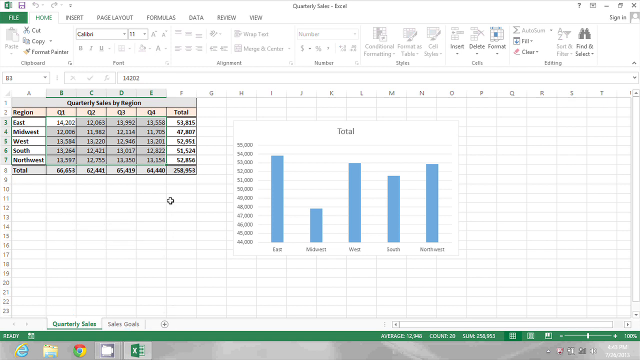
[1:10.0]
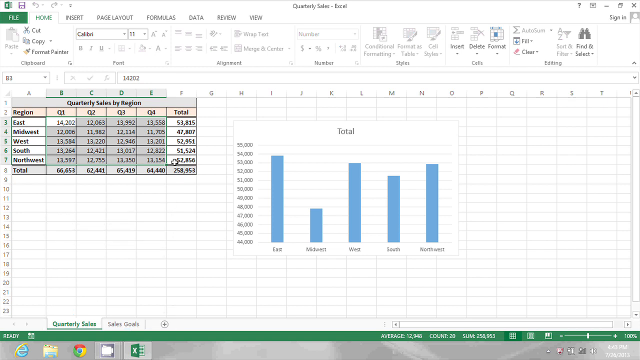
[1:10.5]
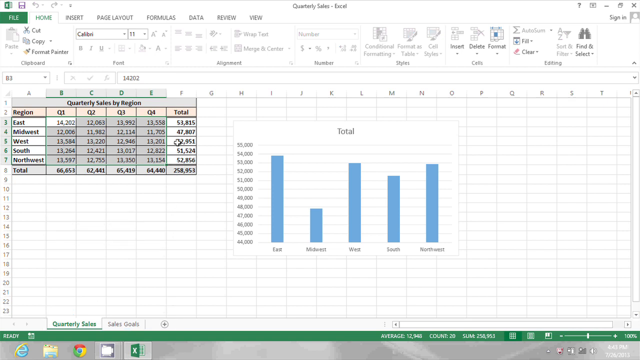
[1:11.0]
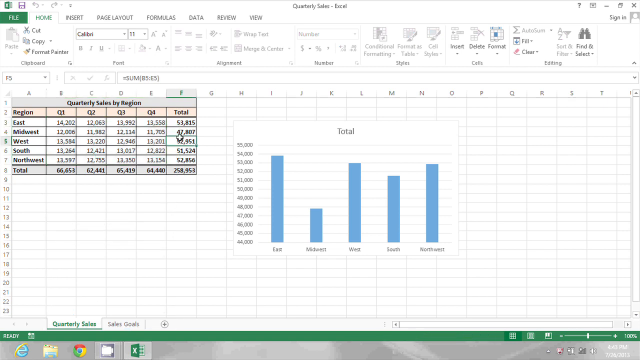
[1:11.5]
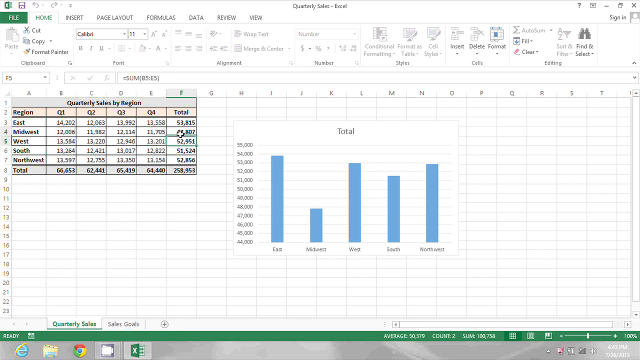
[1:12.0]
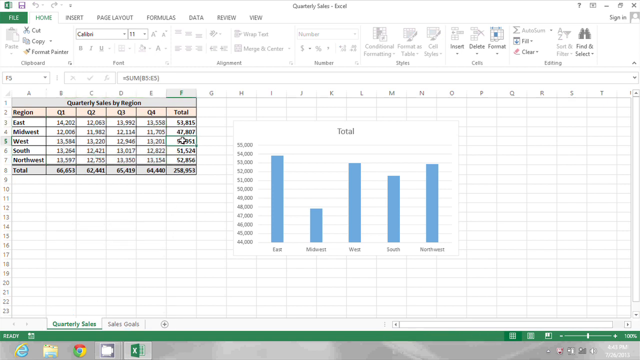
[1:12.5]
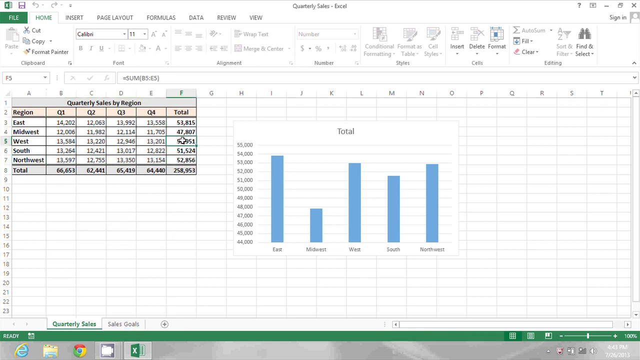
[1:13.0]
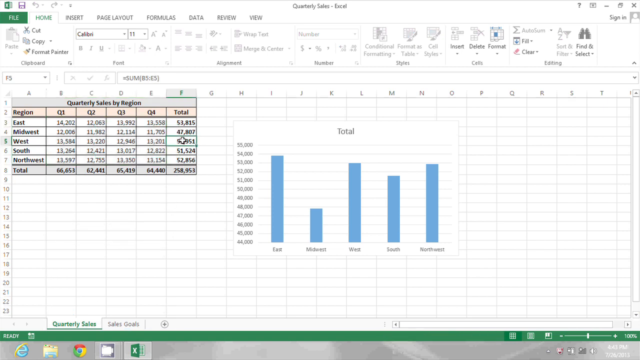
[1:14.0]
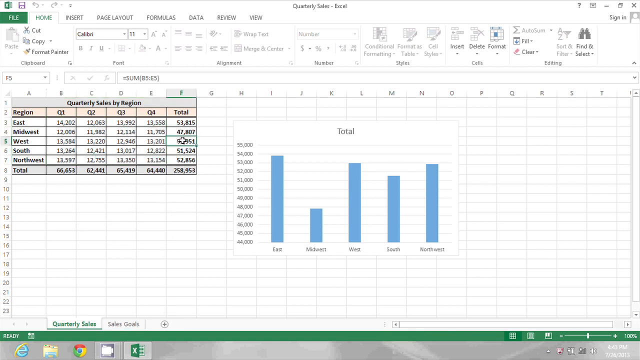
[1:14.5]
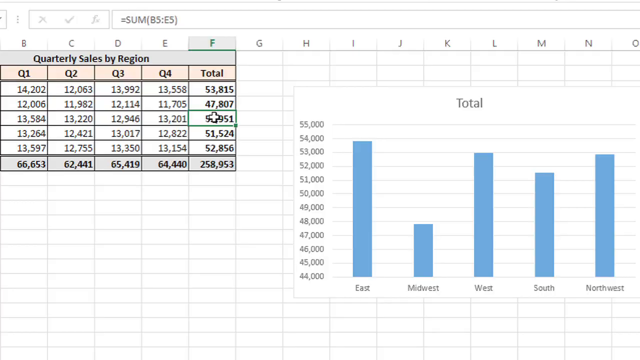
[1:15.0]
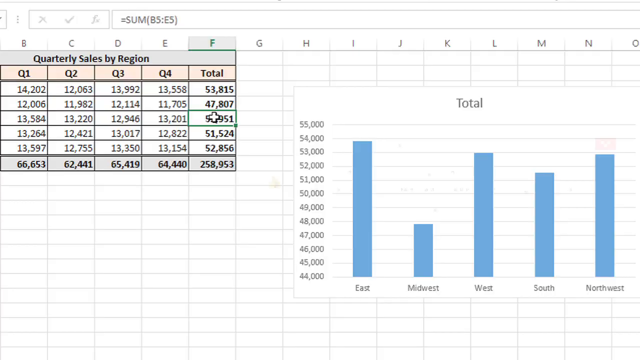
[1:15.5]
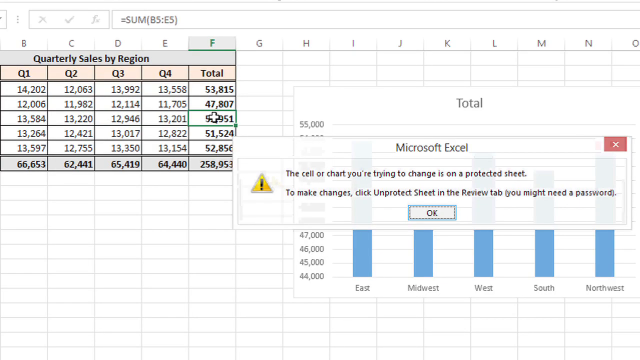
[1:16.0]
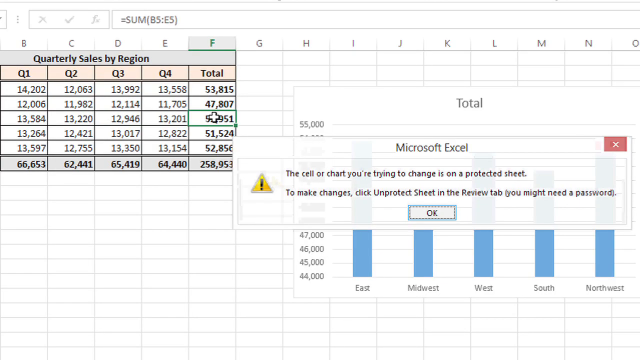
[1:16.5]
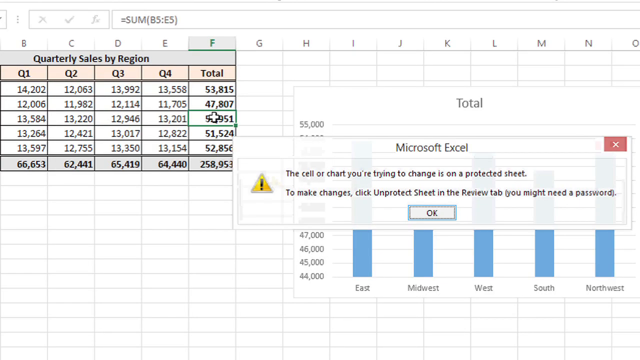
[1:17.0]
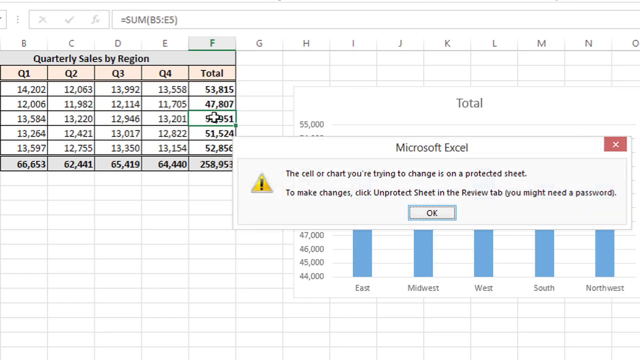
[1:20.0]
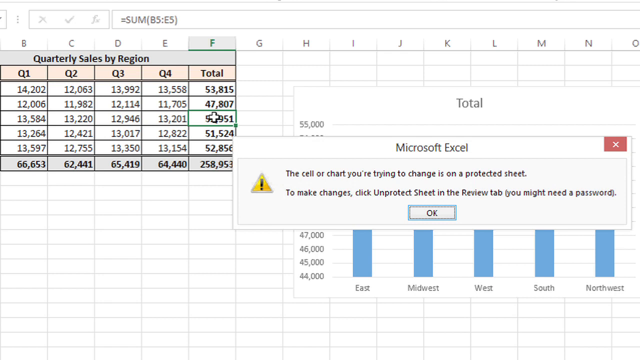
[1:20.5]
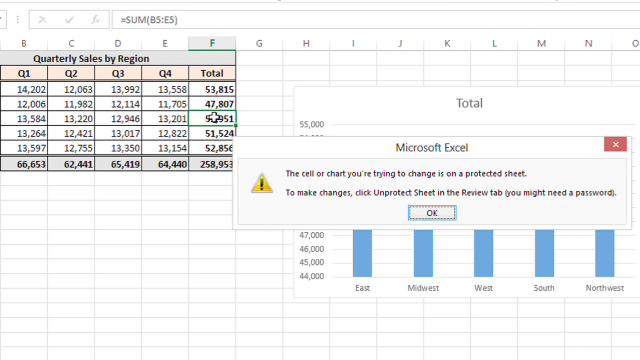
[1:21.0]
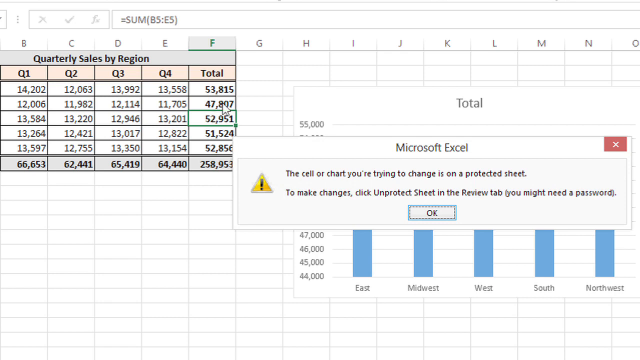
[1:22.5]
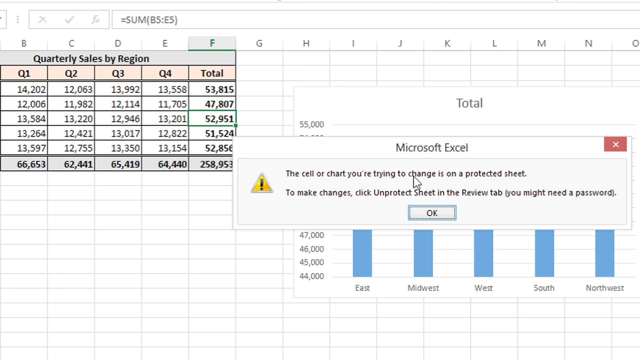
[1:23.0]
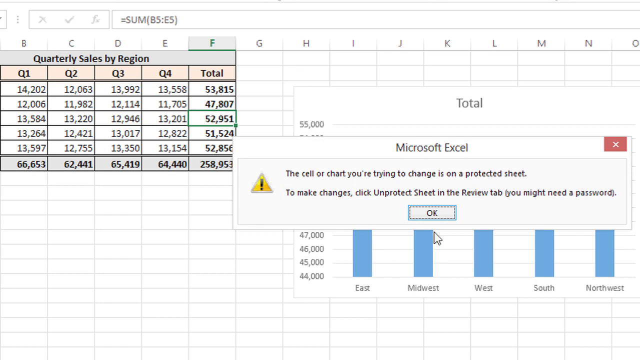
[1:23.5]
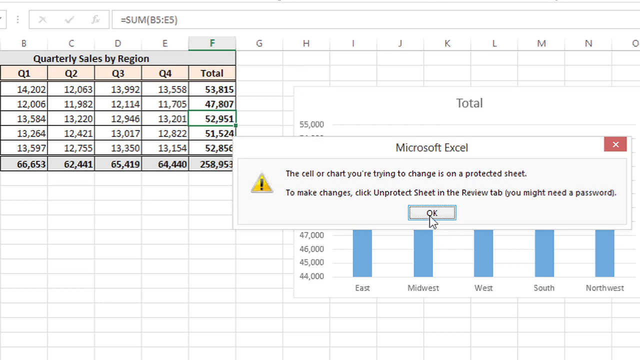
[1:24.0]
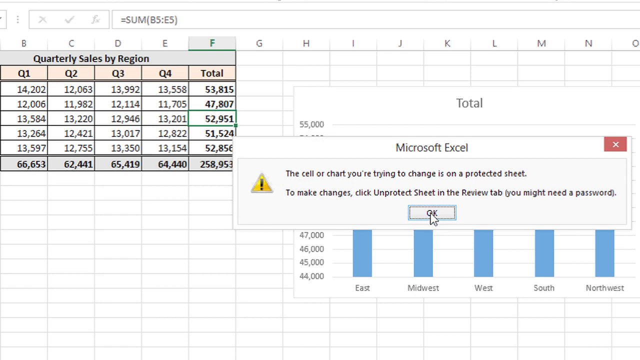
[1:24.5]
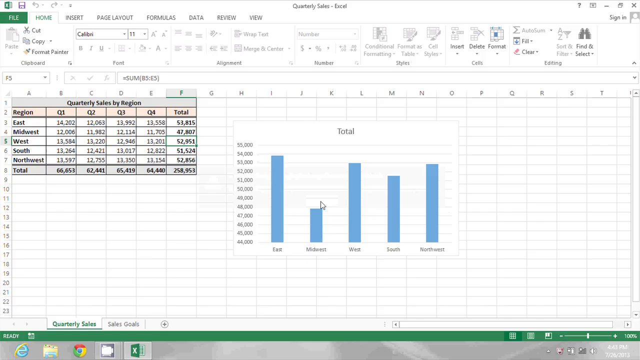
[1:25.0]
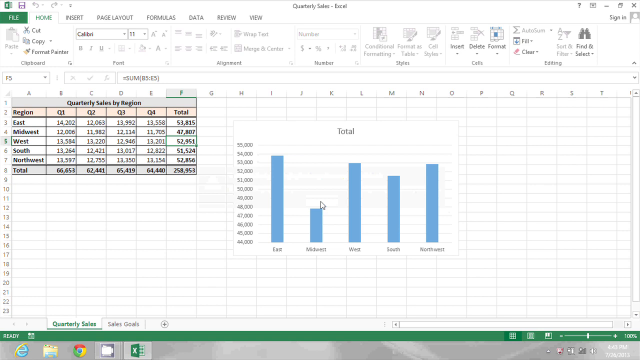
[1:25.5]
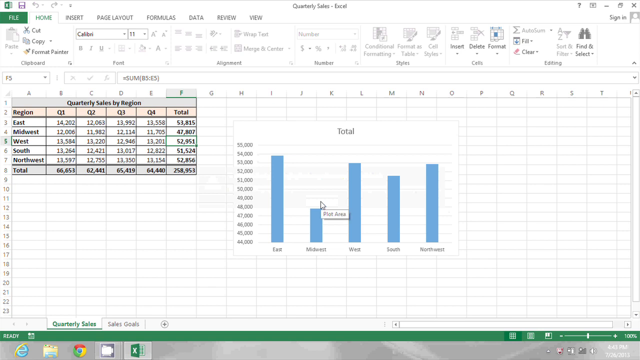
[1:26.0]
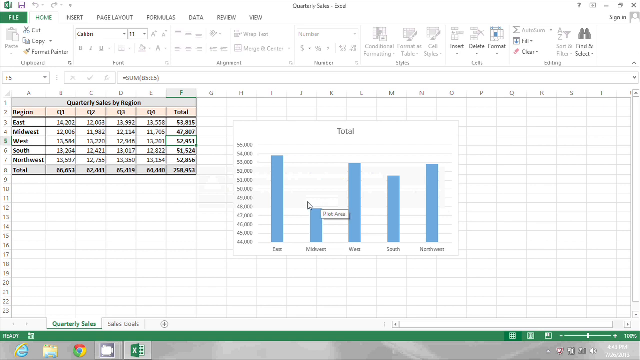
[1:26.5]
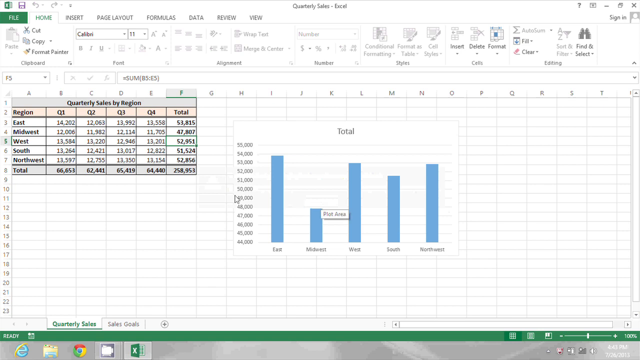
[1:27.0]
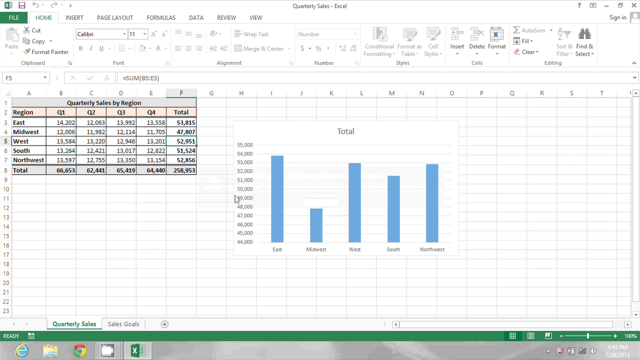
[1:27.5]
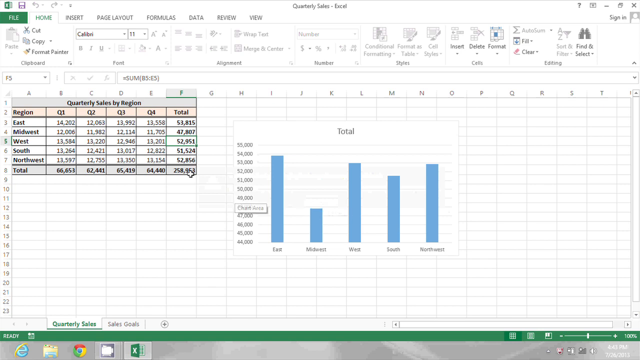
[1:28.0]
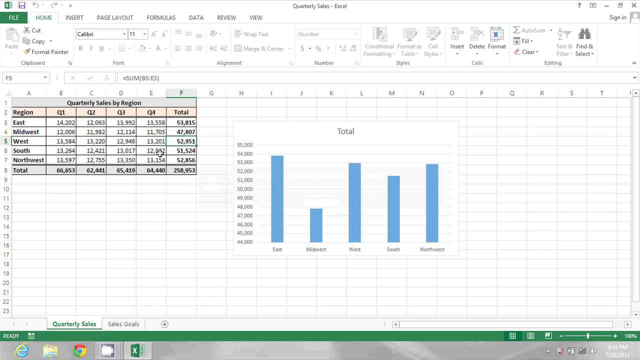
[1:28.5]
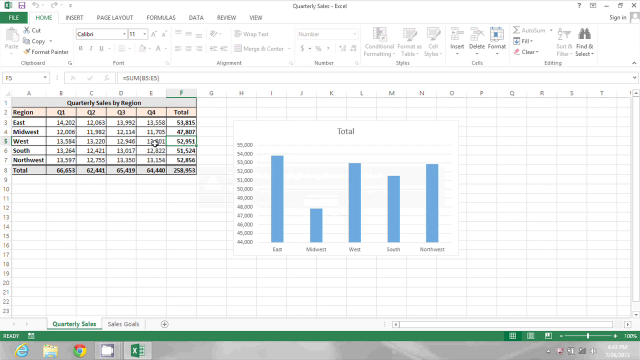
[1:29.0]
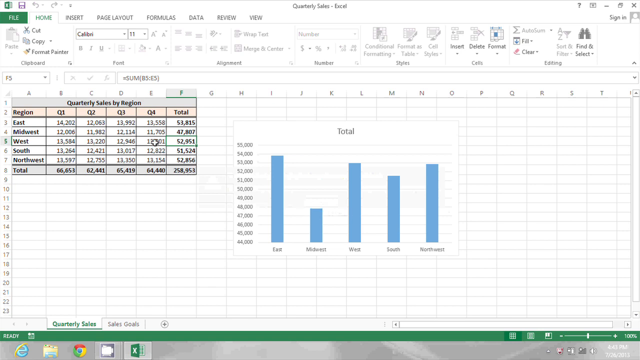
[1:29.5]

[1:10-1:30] The entire Excel screen with all the statistics is visible. She moves the mouse back onto the quarterly sales region and clicks, unhighlighting all the sections, then places it specifically on the West and total section. She leaves it there as the screen zooms in further on the quarterly sales by region. A Microsoft Excel pop-up window then appears, stating that the cell or chart being changed is on a protected sheet. She leaves it on screen for a second, moves the mouse down to the OK button and clicks it, closing the pop-up. Her mouse then moves from the center of the screen over to the left, back onto the quarterly sales by region section.